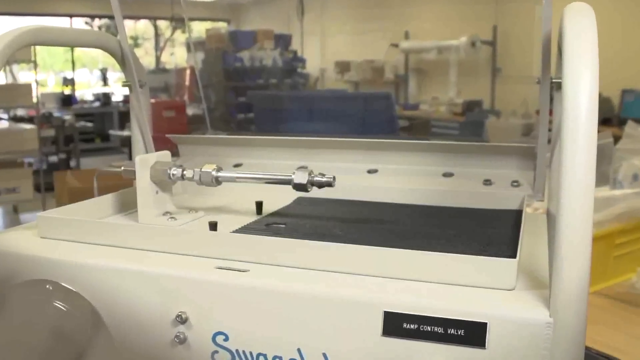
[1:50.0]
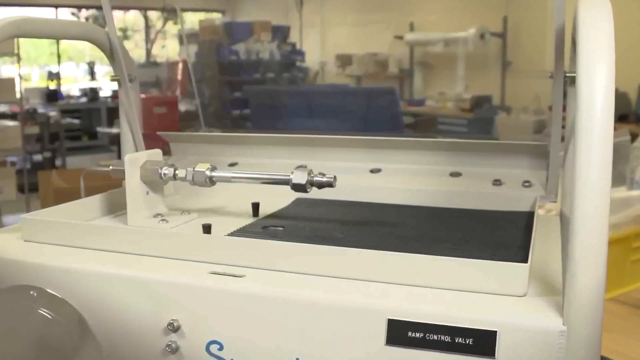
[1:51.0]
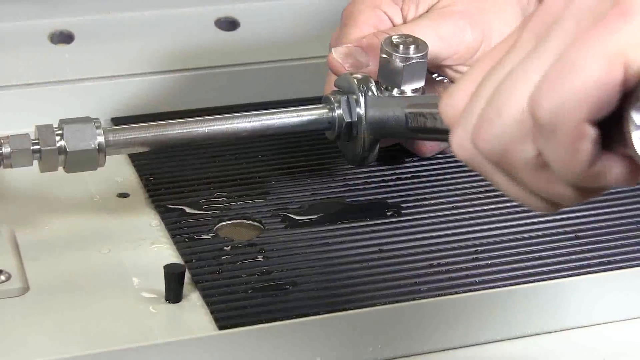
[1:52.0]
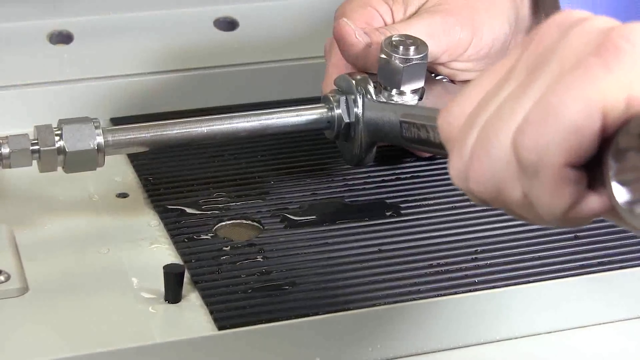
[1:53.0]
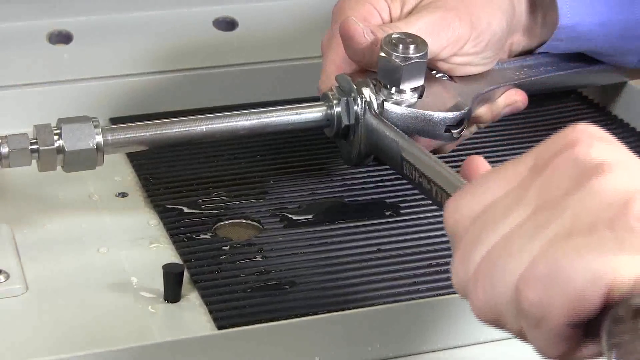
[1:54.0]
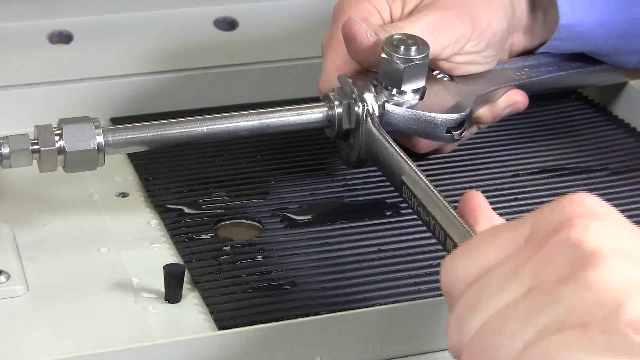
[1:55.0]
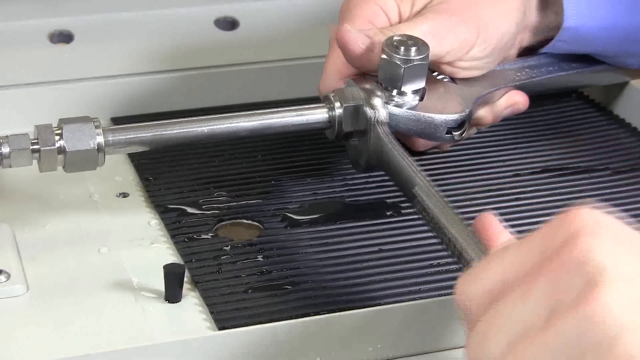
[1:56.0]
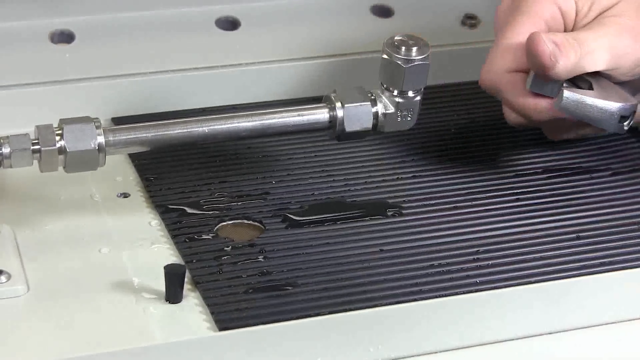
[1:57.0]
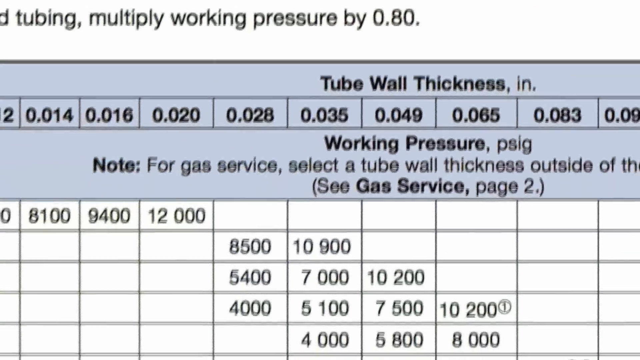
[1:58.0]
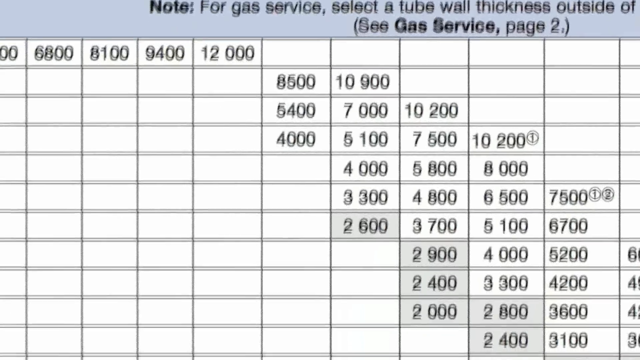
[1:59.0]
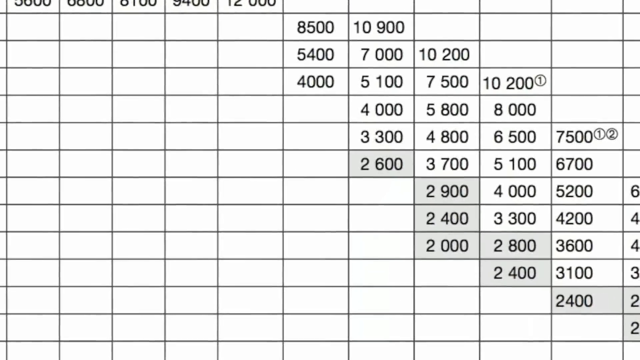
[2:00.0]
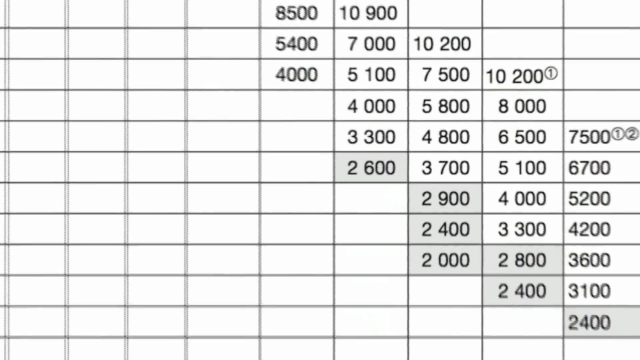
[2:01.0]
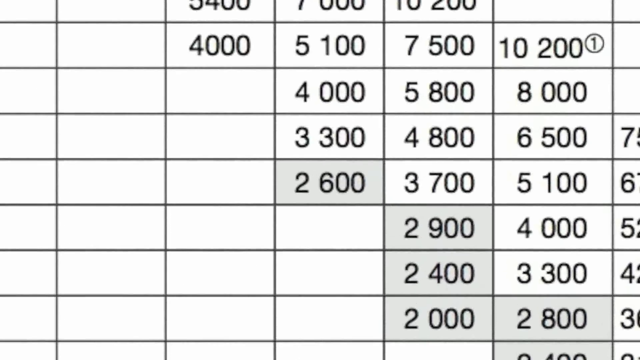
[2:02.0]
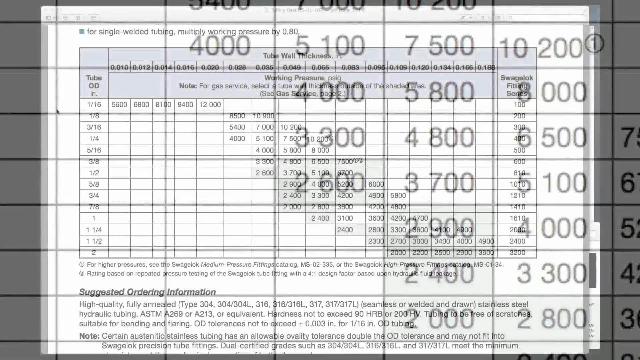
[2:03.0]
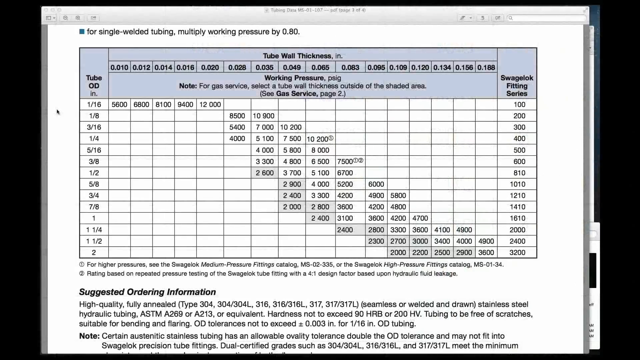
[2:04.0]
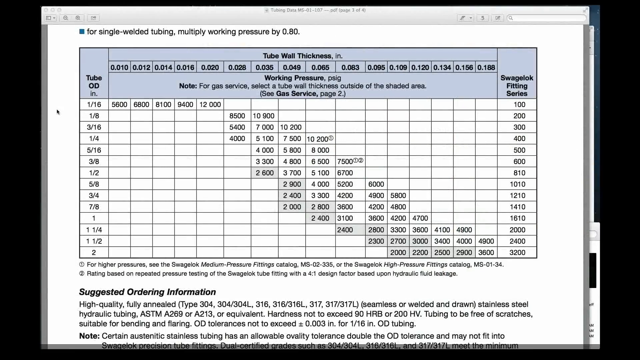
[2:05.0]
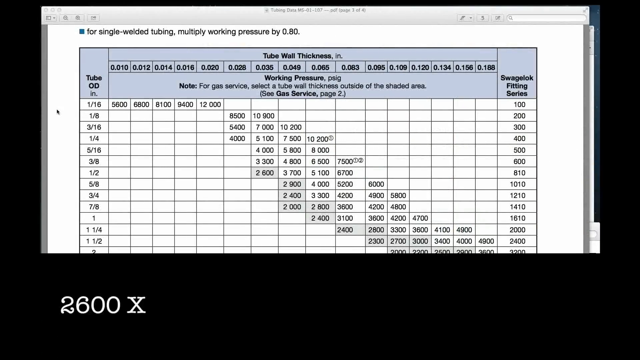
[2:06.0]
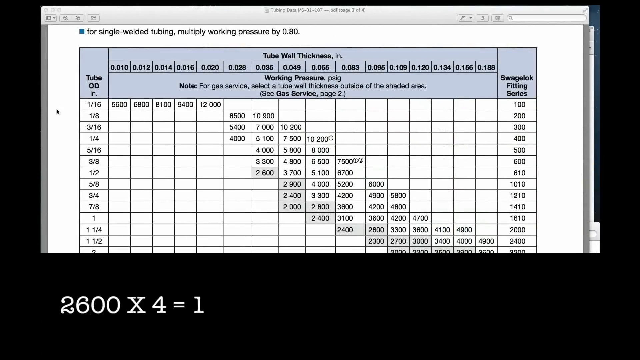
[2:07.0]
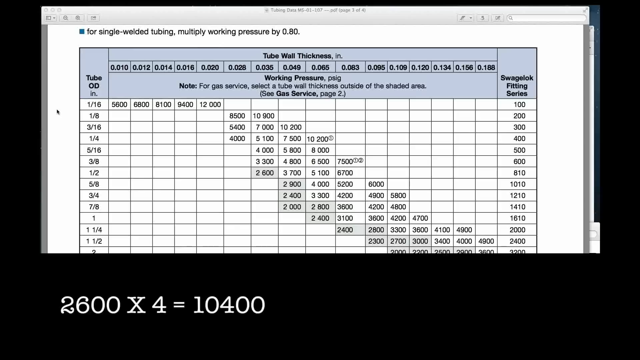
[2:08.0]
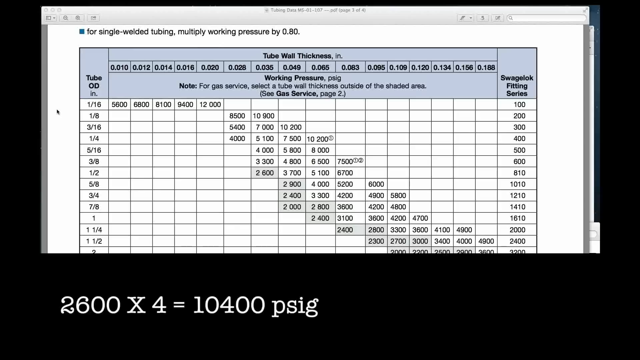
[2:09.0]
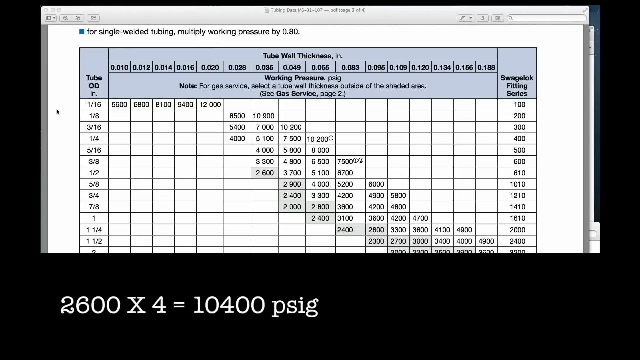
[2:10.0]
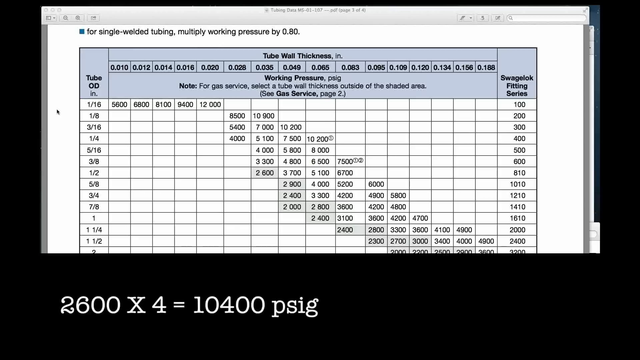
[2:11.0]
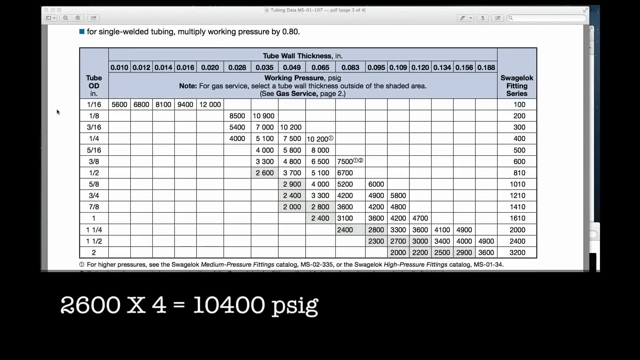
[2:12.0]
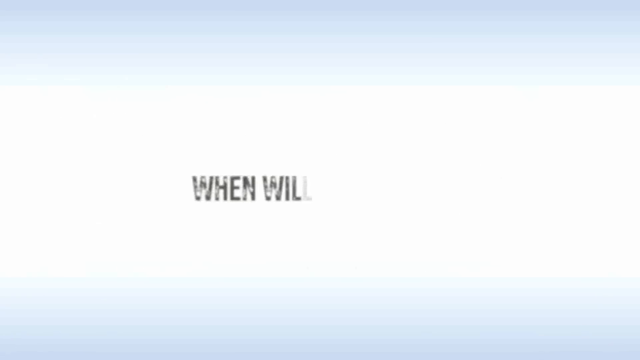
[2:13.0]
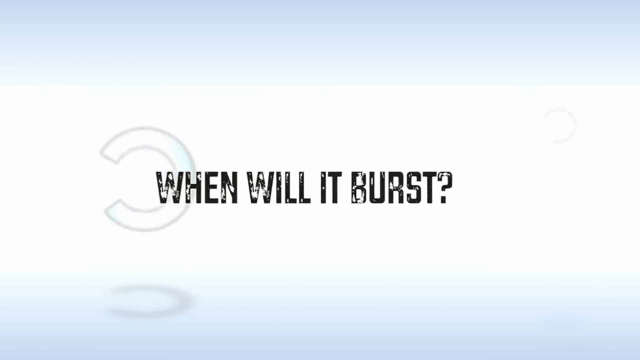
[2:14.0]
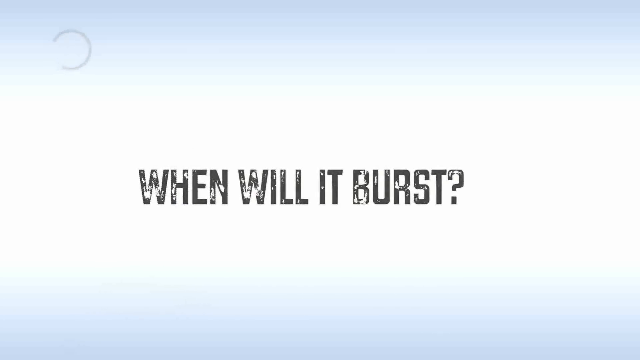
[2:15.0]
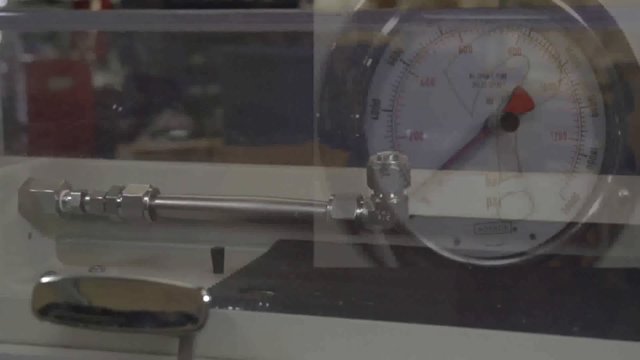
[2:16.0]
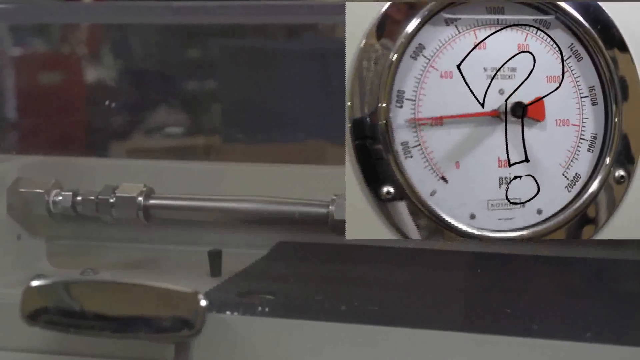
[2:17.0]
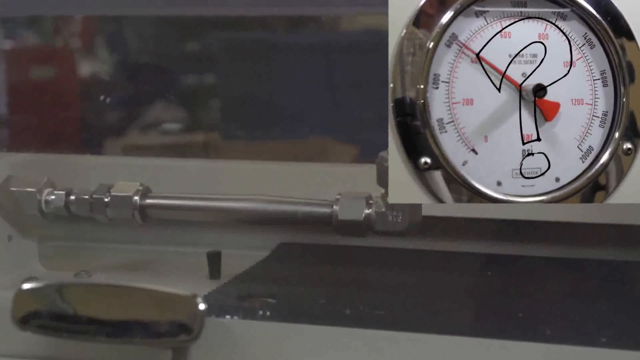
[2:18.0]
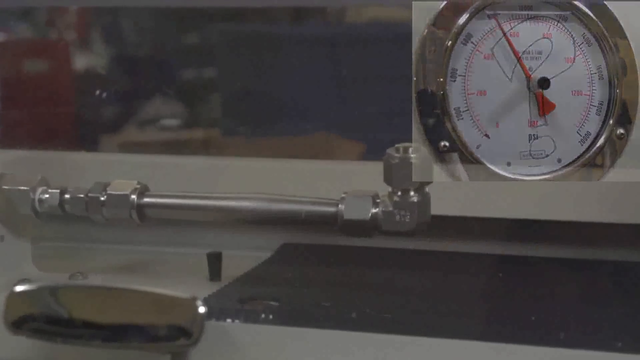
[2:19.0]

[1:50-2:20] What appears to be a machine with a tube inserted into it is shown, possibly some sort of testing apparatus. It is big and almost looks like it has a cover on it, a kind of white plastic with a see-through cover, and the pipe is attached to it. A person's hand attaches the pipes into the machine, which is probably some sort of testing device or gauge. The screen goes back to the chart about tube wall thickness and the working pressure it can withstand, and a formula at the bottom of the page reads "2600 times 4 equals 10,400 PSIG". Then "when will it burst?" appears again, followed by an image of a pressure gauge next to a pipe hooked into the machine or measuring device, and eventually the pipe bursts.